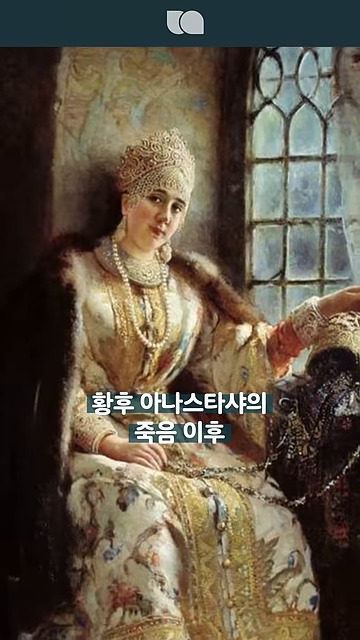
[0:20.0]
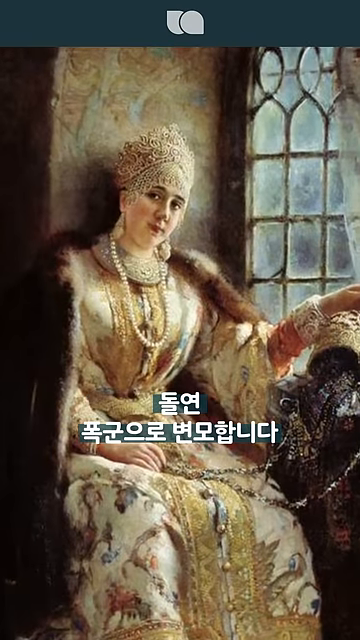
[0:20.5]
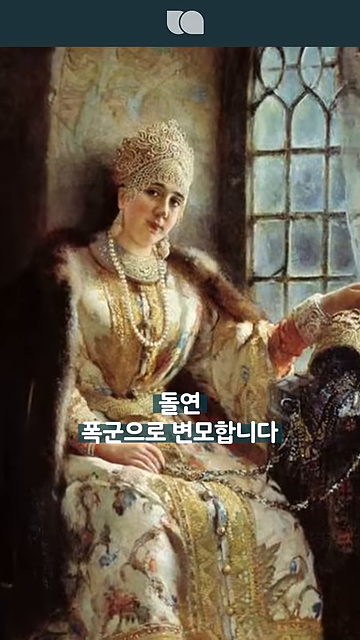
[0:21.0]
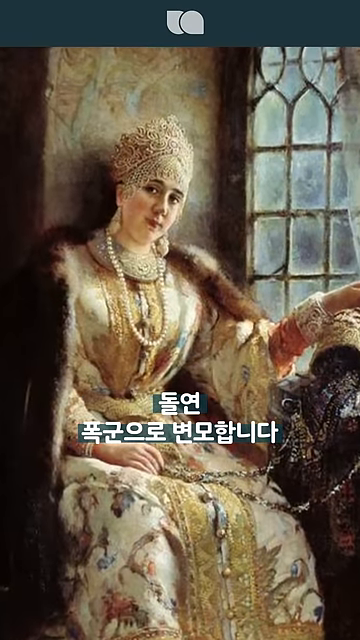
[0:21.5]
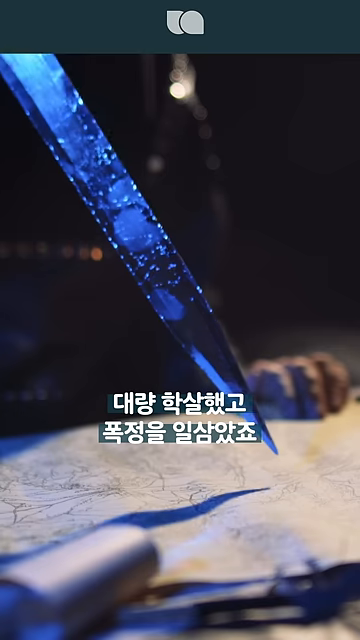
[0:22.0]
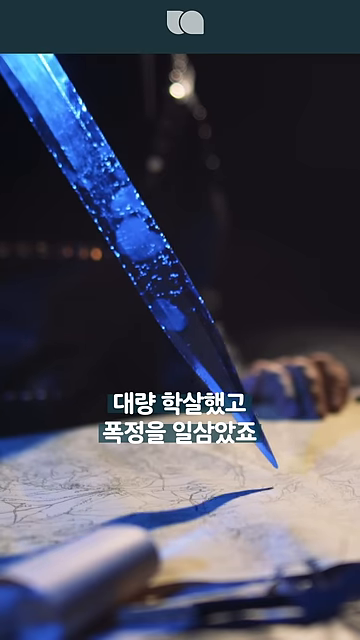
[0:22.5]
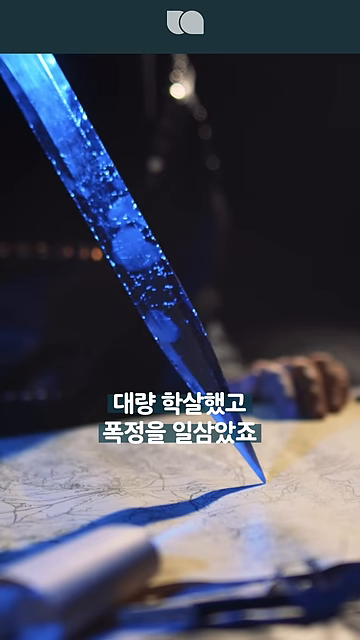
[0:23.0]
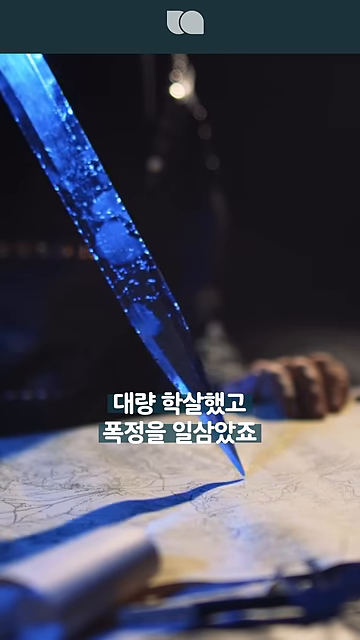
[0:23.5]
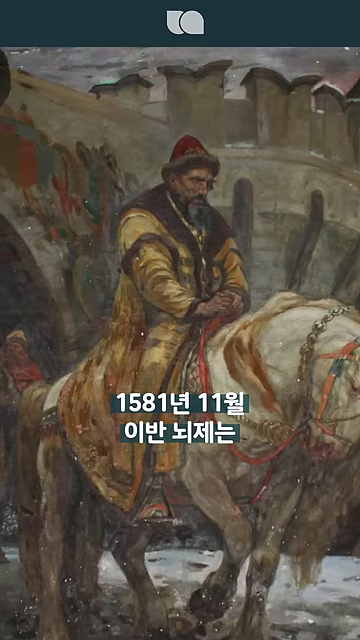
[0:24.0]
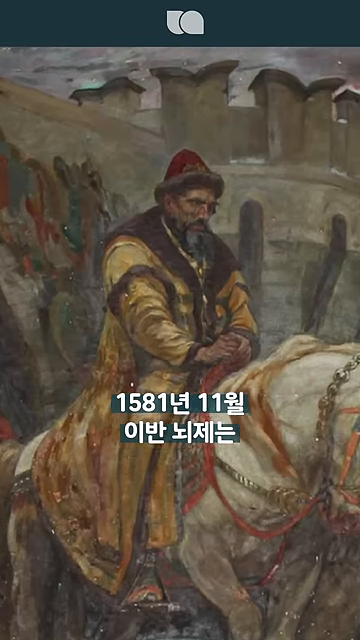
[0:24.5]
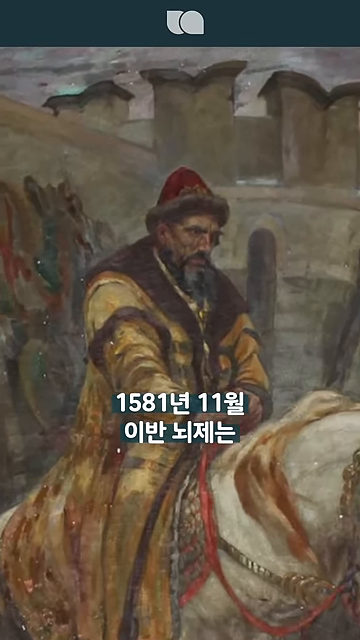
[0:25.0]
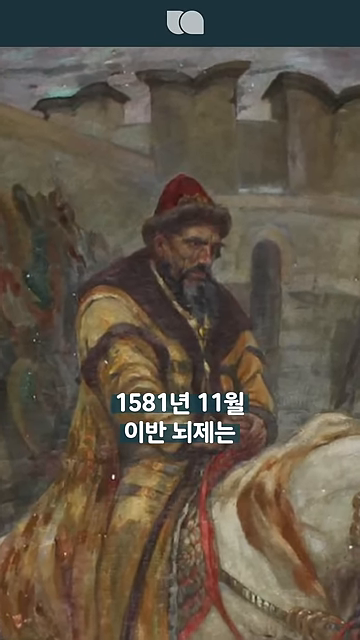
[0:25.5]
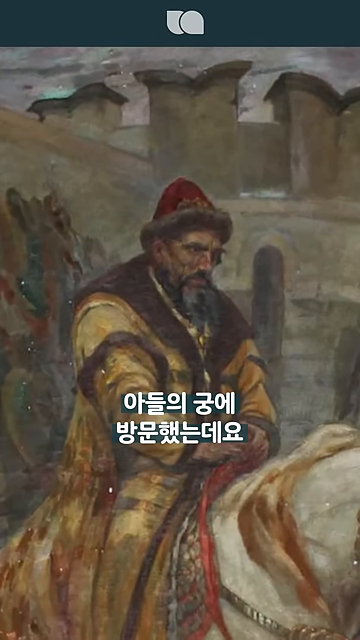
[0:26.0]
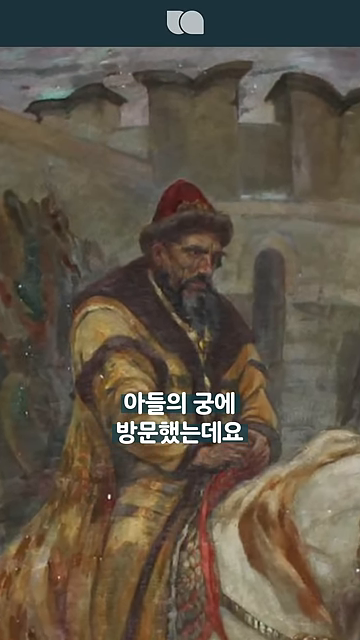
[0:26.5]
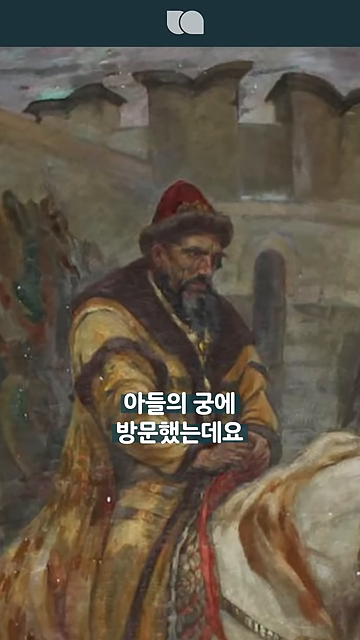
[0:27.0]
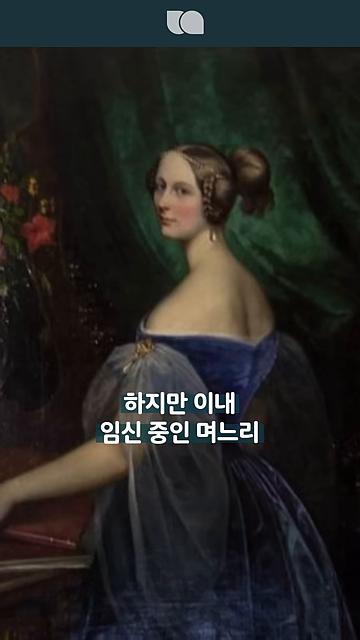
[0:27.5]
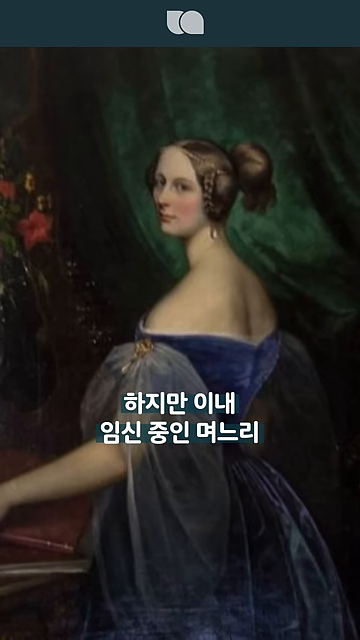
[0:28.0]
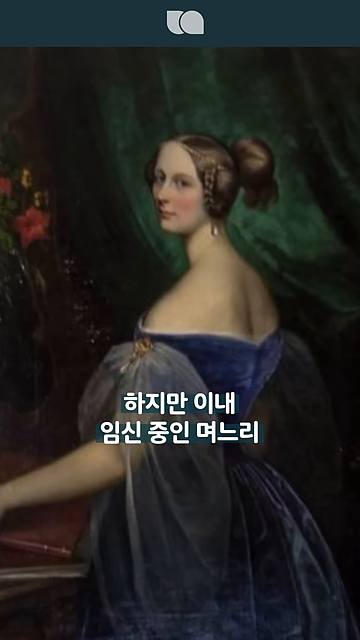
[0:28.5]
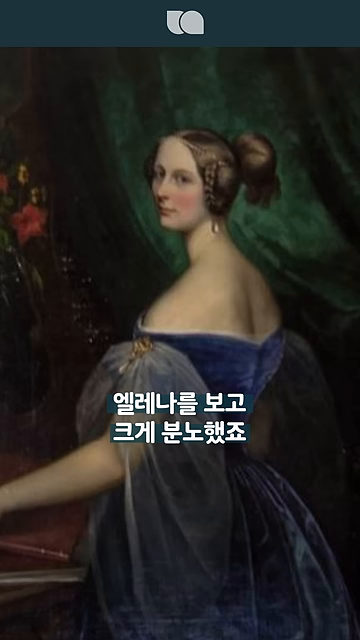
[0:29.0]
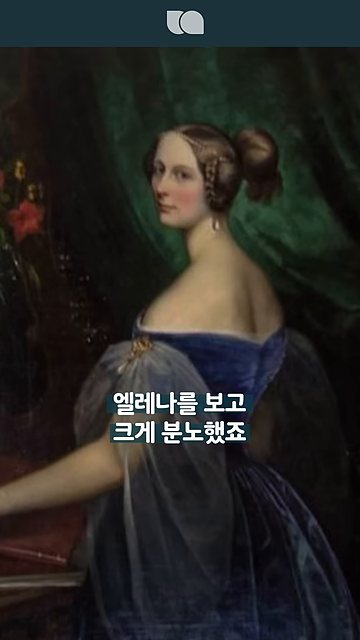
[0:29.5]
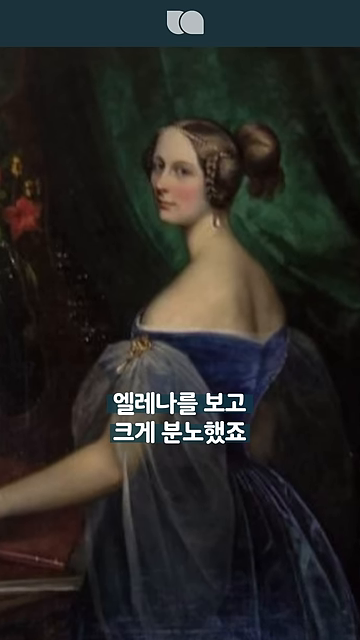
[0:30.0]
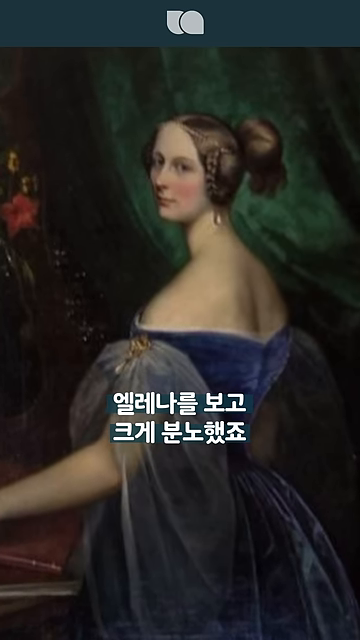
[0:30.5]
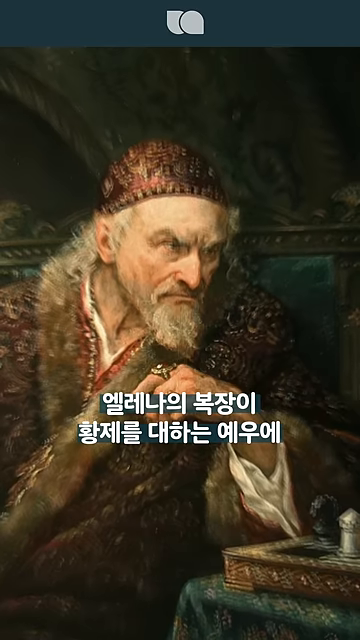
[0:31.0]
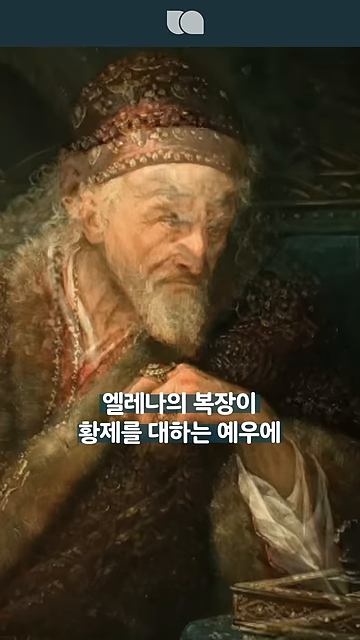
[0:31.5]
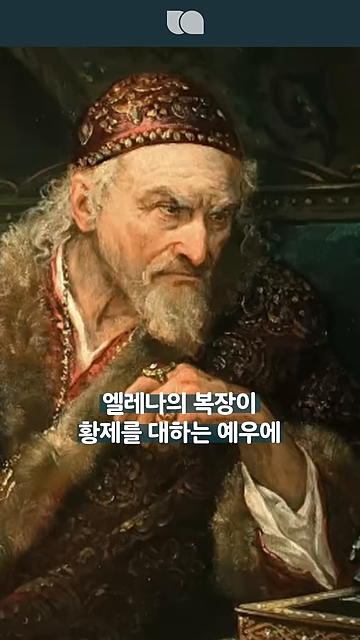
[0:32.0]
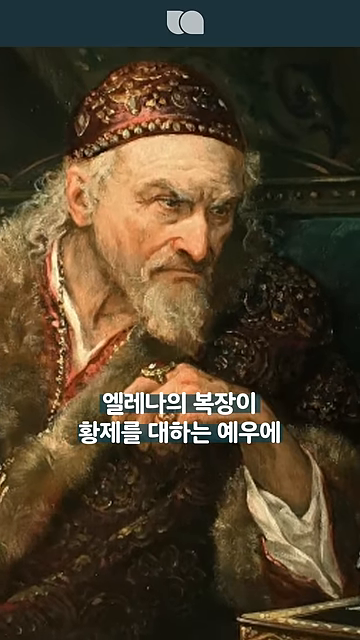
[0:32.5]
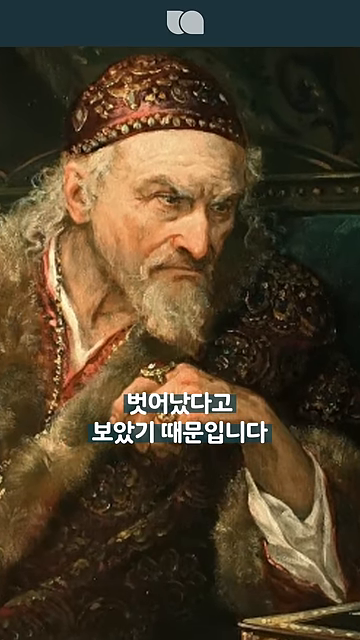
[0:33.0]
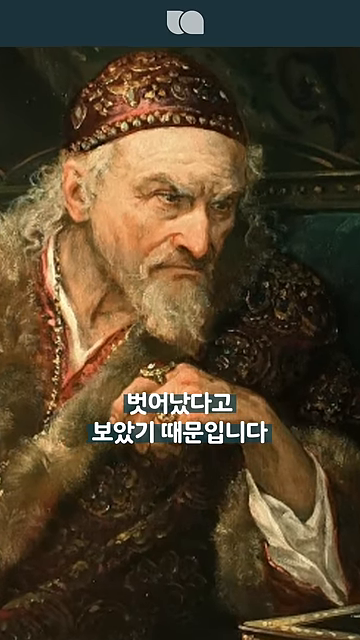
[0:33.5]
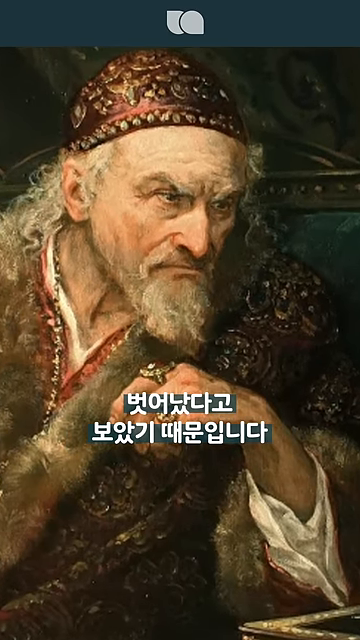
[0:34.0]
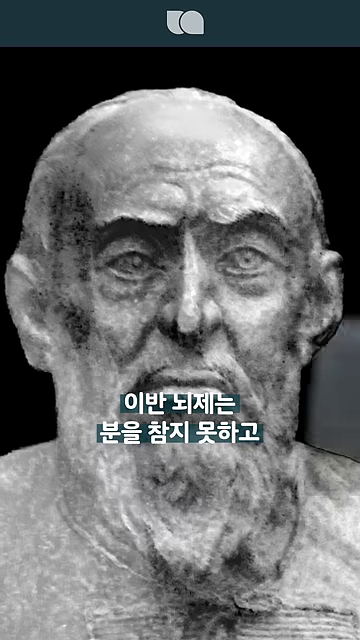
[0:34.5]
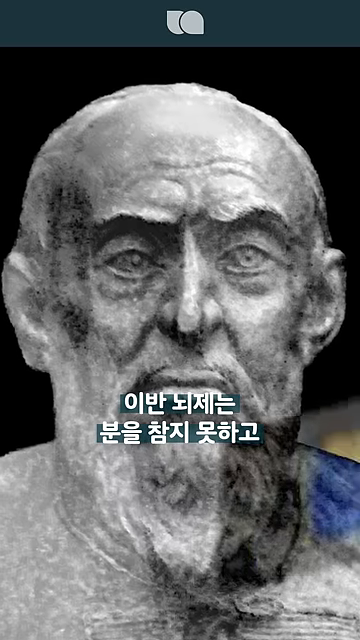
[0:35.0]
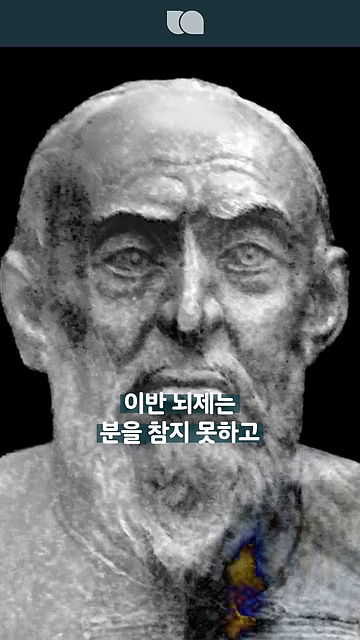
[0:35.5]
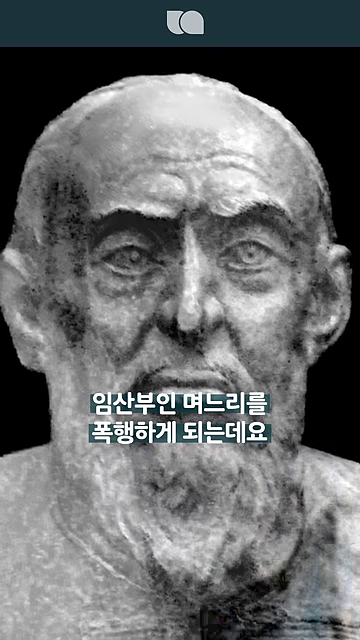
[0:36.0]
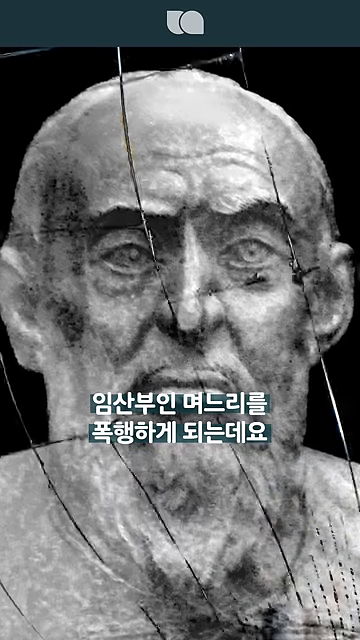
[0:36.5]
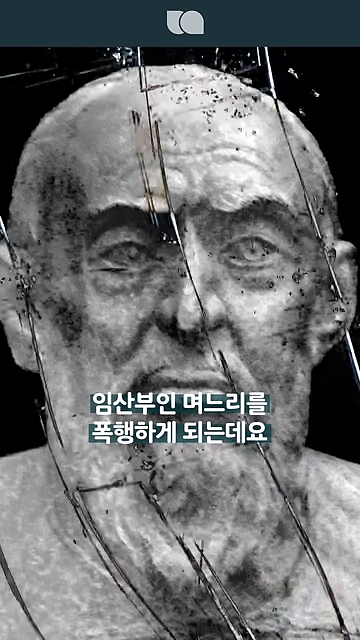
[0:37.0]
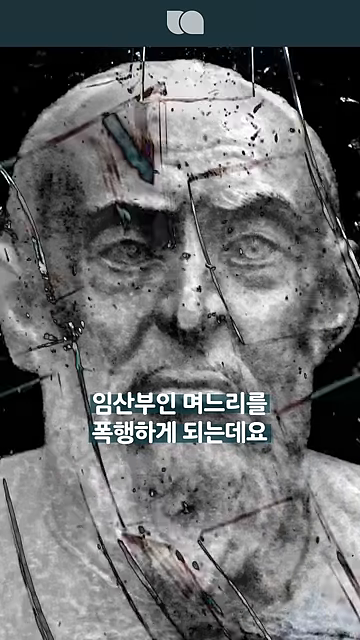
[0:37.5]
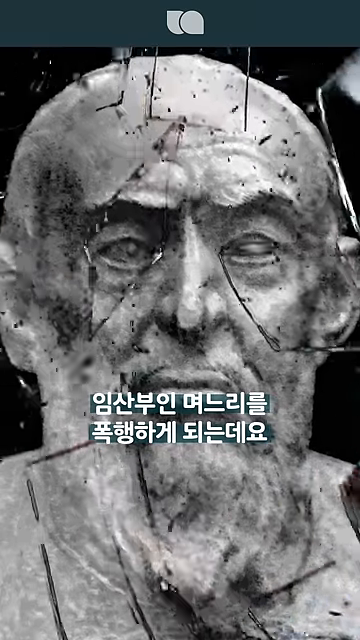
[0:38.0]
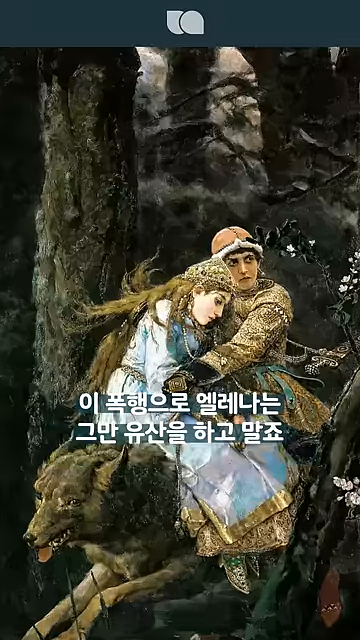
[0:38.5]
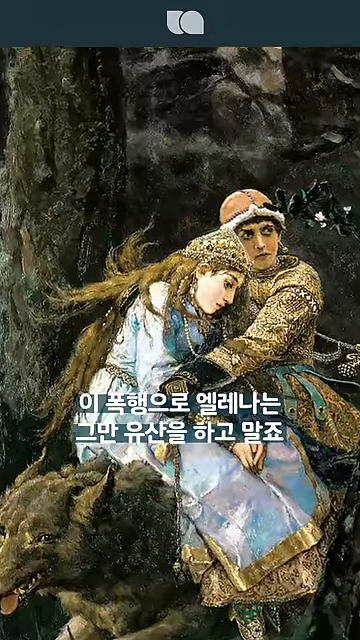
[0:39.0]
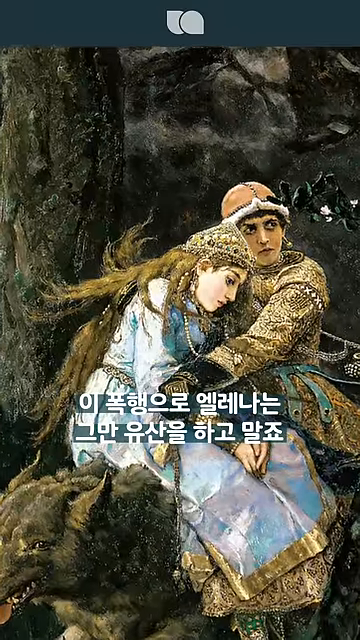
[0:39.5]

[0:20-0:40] A woman in royal clothing sits on a golden throne. The video shifts to a knife being lightly dragged across a surface, then to the royal man riding a white horse. It switches to a brunette woman in a blue dress, then back to the man who was on horseback, staring intently at someone off screen with a very angry expression; he seems to be portrayed as jealous or protective of the woman, with a bit of a temper. Next comes a picture of his bust with many mirror pieces breaking apart, followed by a drawing of him carrying a woman, seemingly on a wolf.